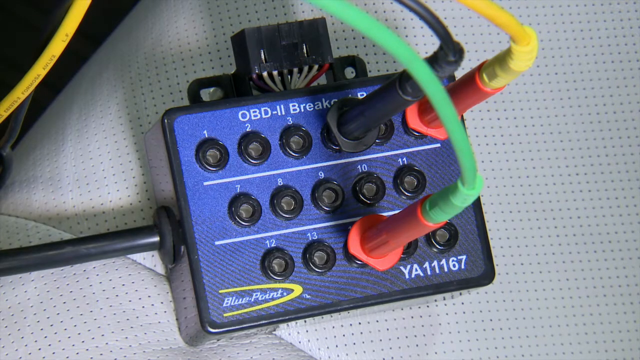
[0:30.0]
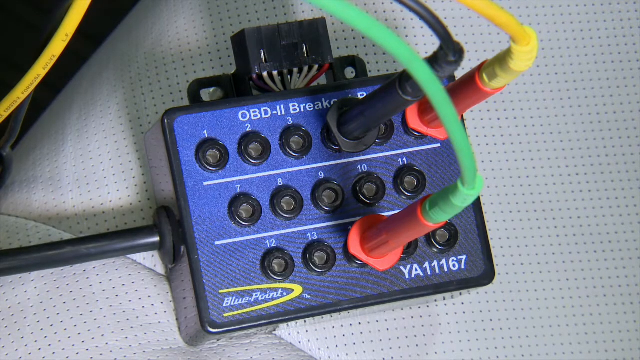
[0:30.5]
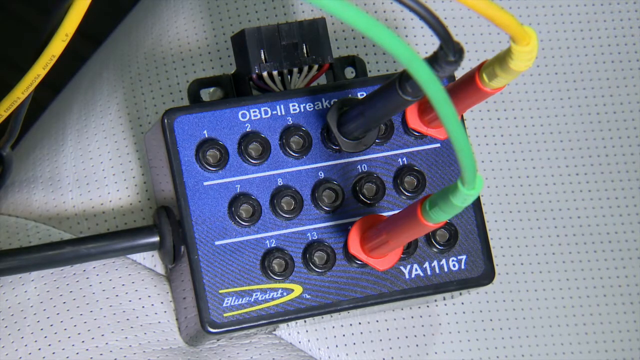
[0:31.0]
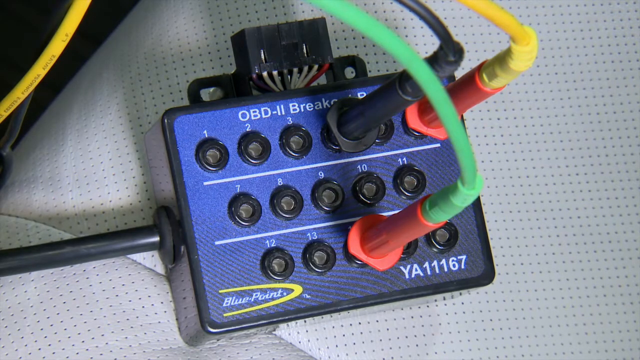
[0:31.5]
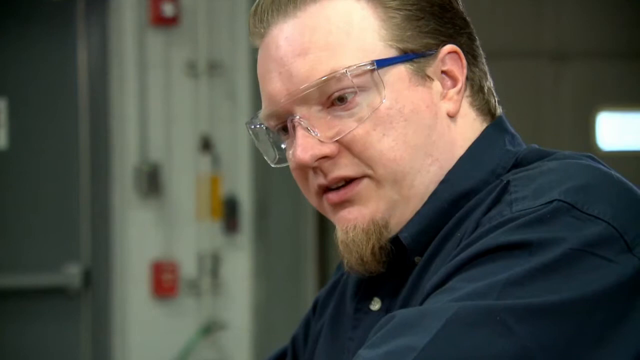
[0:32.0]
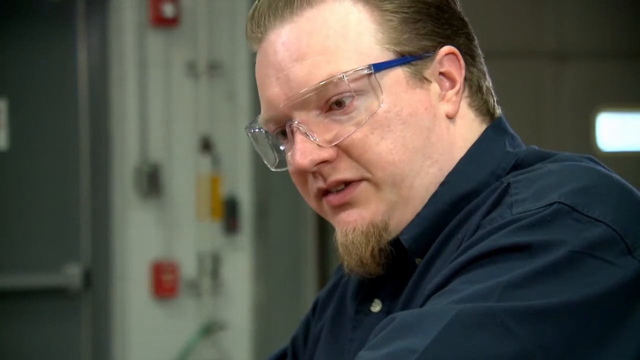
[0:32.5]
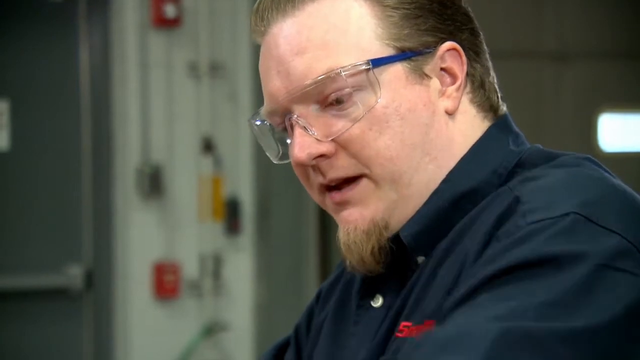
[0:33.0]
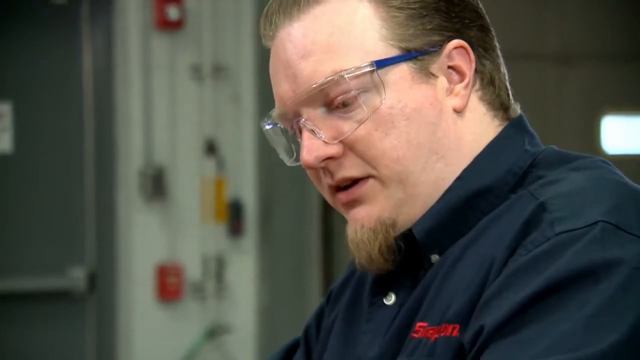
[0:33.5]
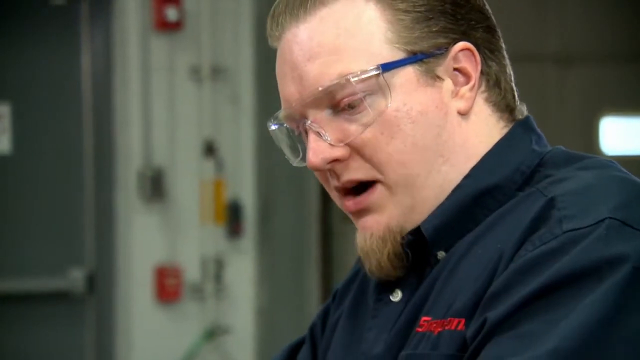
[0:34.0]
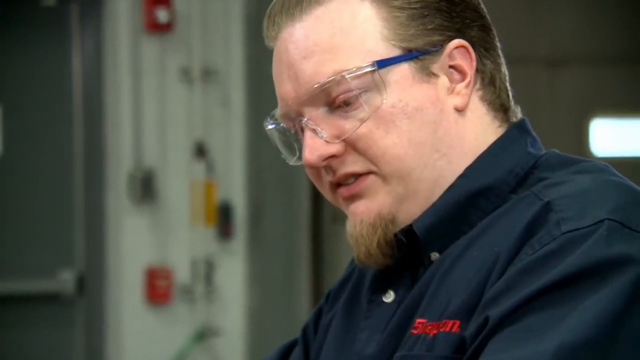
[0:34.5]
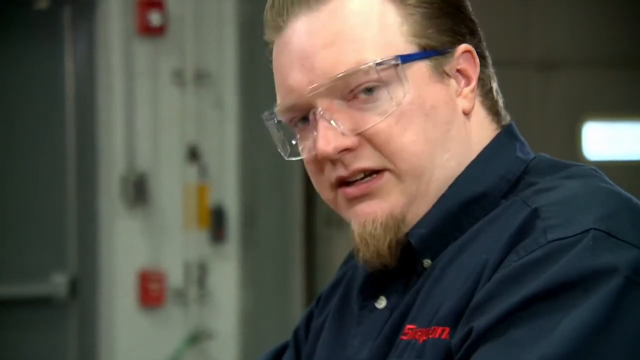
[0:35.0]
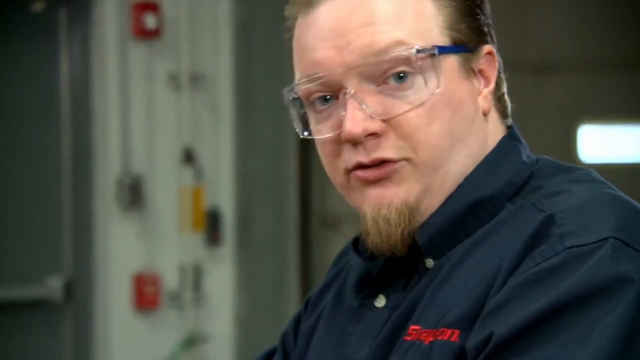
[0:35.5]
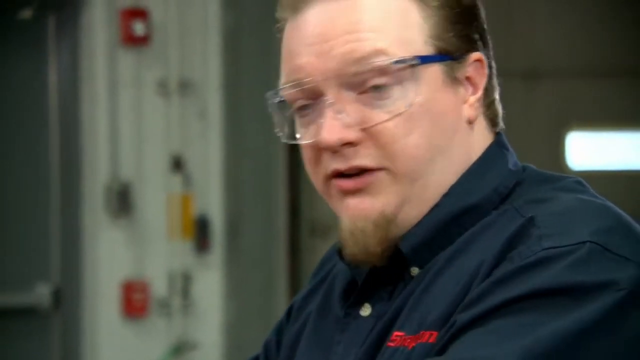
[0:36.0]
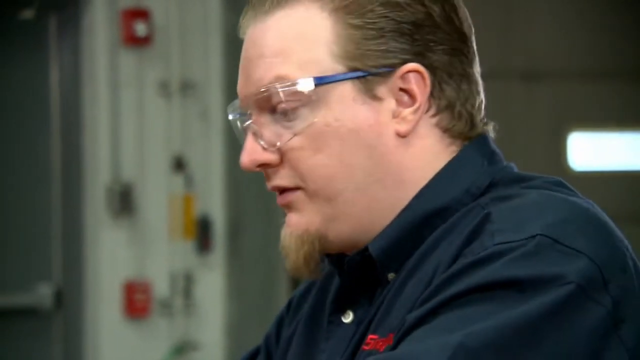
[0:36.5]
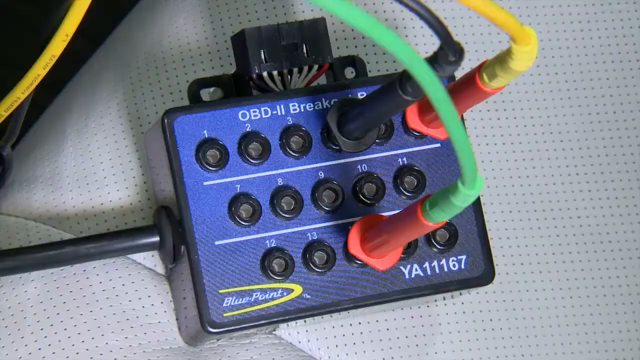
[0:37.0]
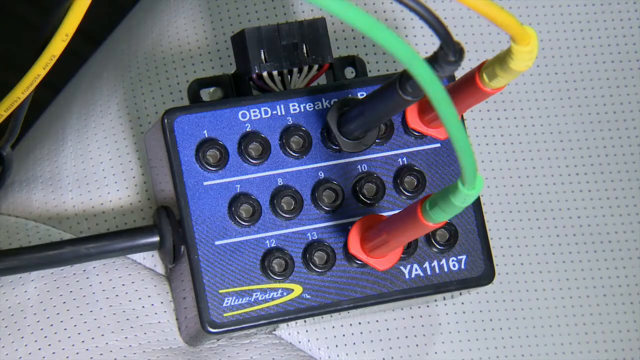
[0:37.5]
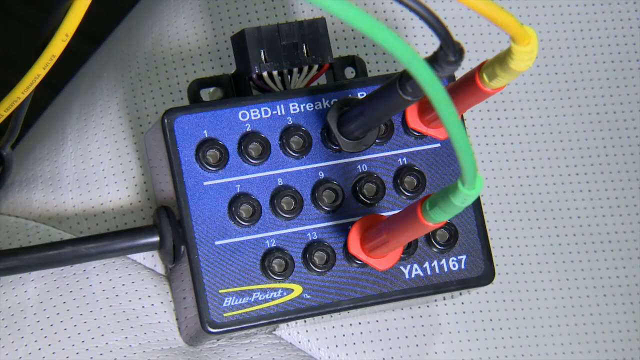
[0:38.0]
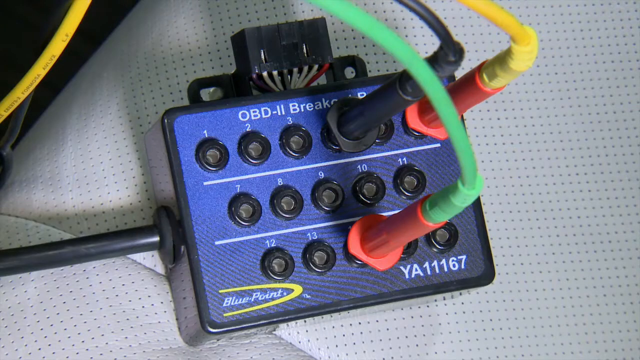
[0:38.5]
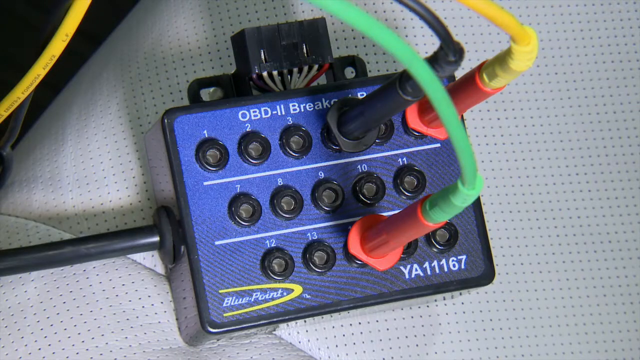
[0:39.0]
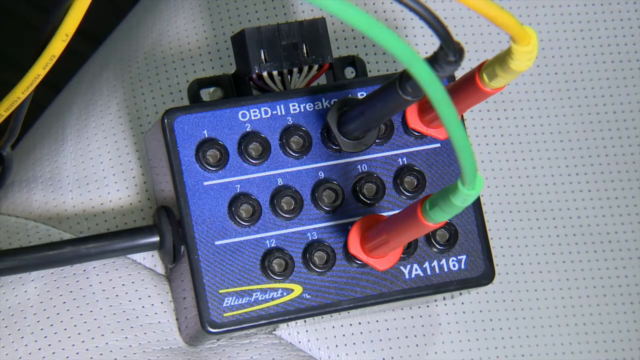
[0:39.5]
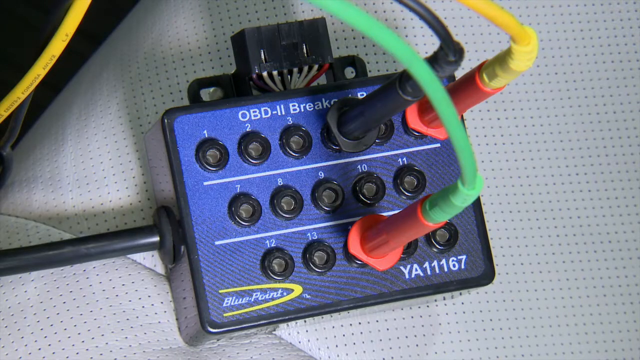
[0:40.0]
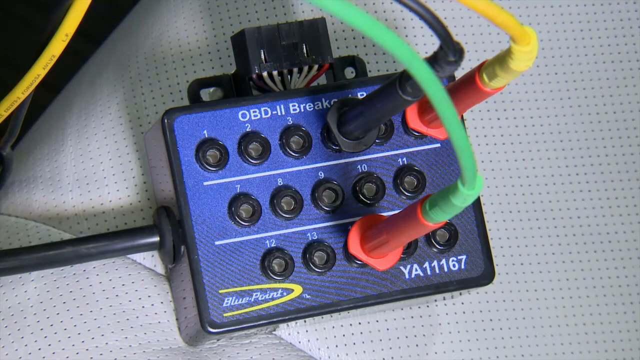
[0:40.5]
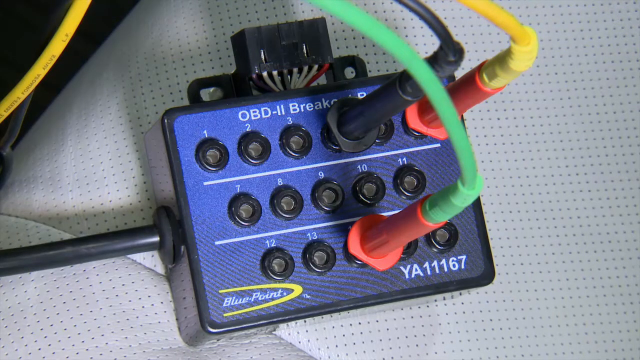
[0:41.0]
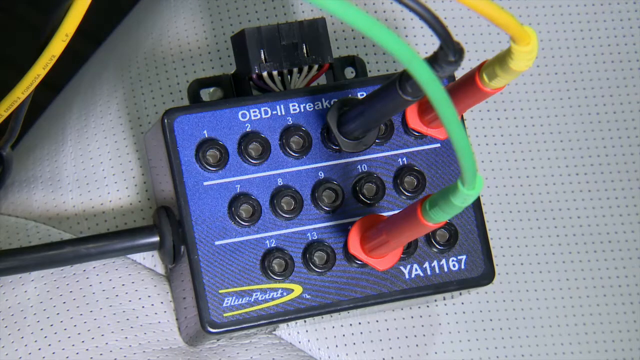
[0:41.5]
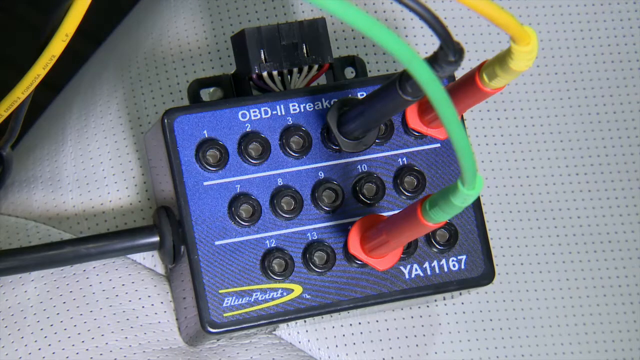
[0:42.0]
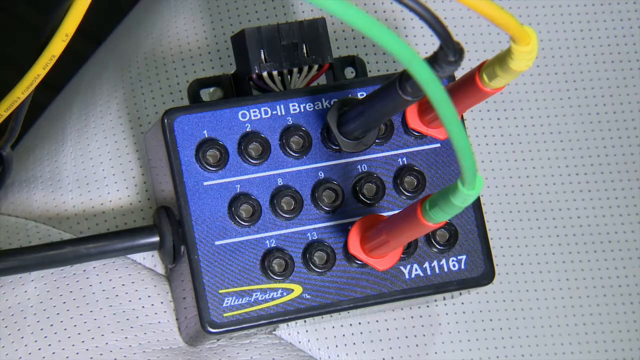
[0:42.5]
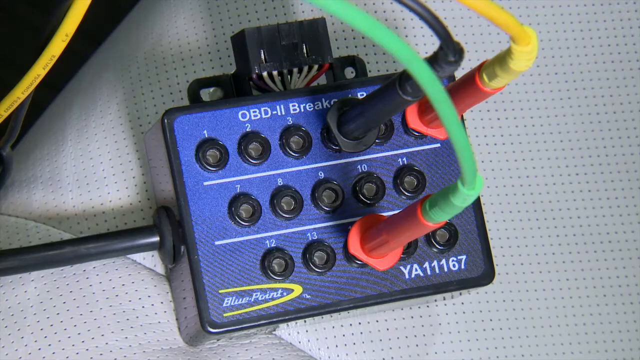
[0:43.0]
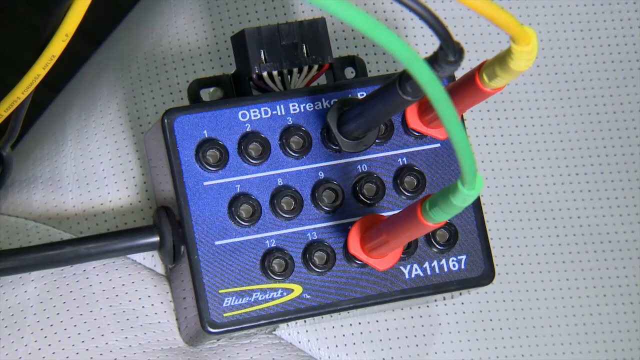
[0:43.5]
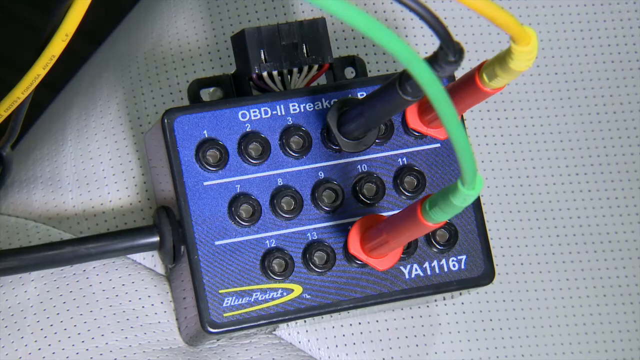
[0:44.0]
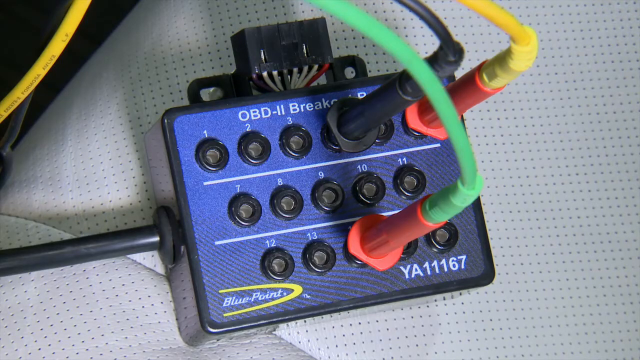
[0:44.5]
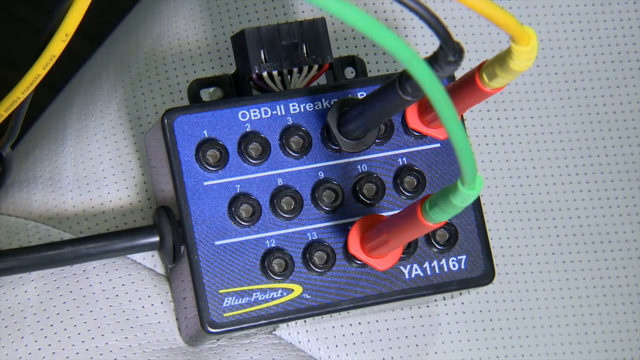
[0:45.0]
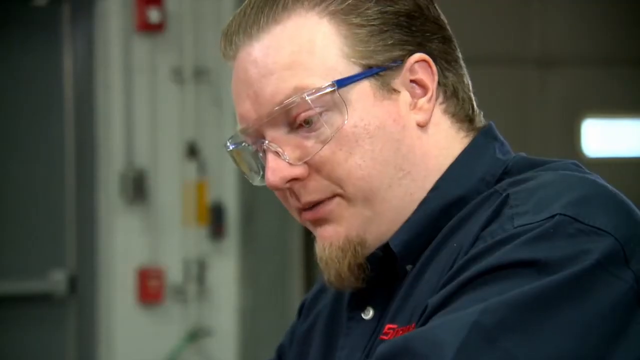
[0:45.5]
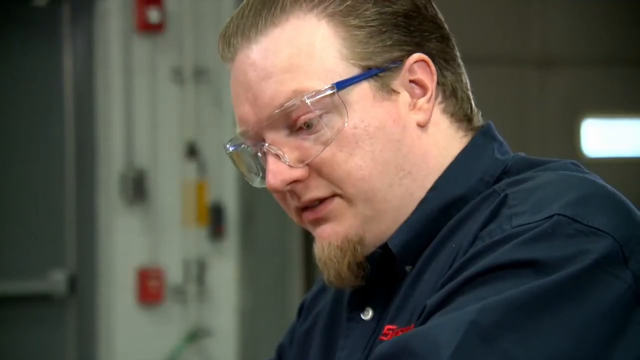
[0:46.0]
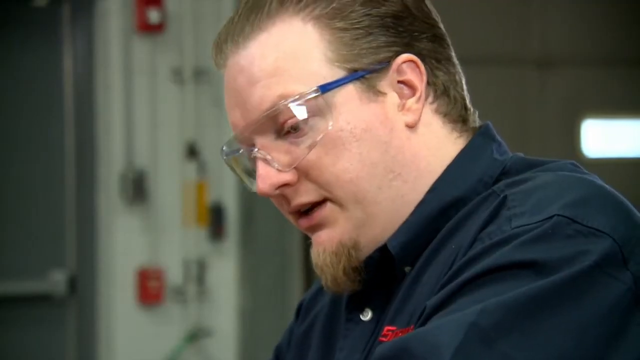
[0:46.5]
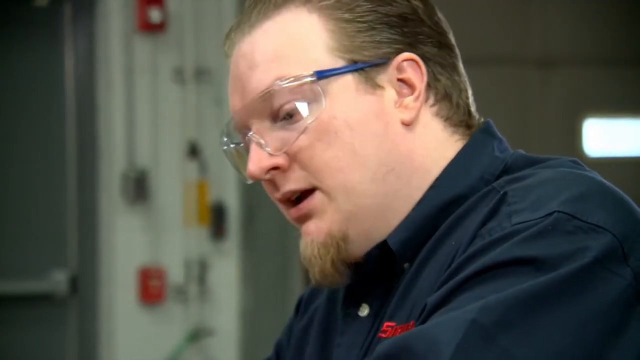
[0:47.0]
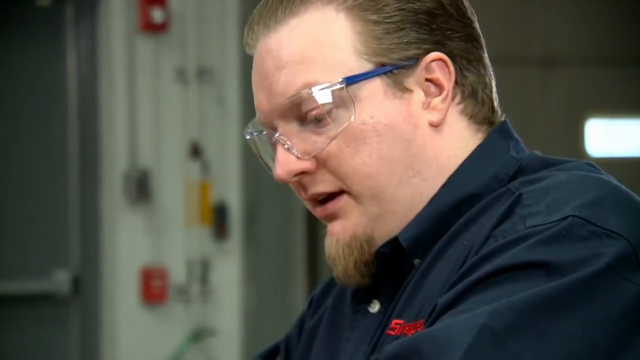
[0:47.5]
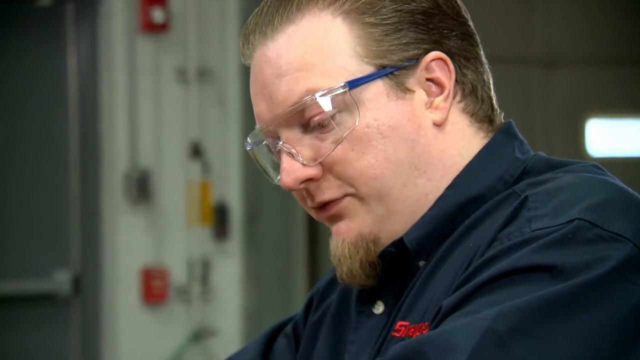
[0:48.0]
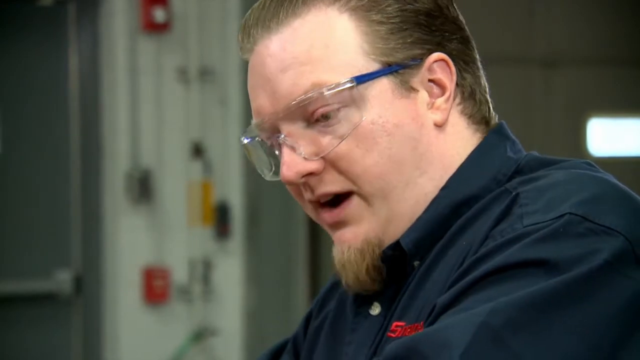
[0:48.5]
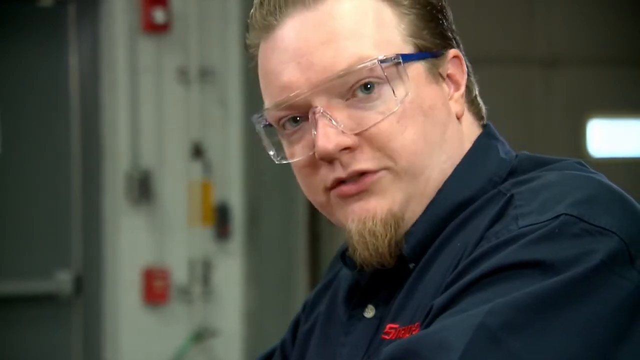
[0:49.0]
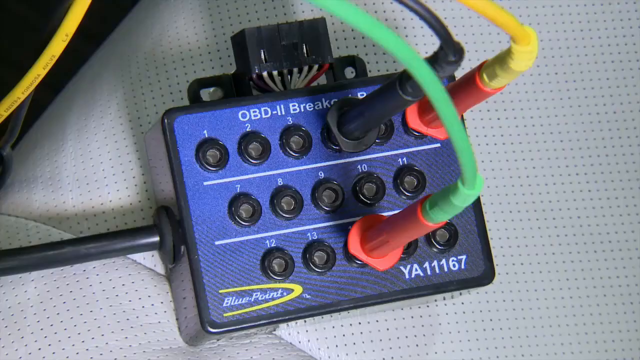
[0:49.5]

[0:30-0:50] The close-up on the OBD II breaker continues, then the video shows Jason, the field trainer, wearing goggles. It cuts back to the breaker, with "YA11167" in the lower right corner and "BluePoint" in the lower left corner. Three cable plugs are plugged in: one with a red base and a neon green cord, one with a black base and a black cord, and one with a red base and a yellow cord. The breaker is on what appears to be one of the car's seats. The camera cuts back to Jason, who wears goggles and looks down as he speaks, then cuts back again to the blue OBD II breaker.